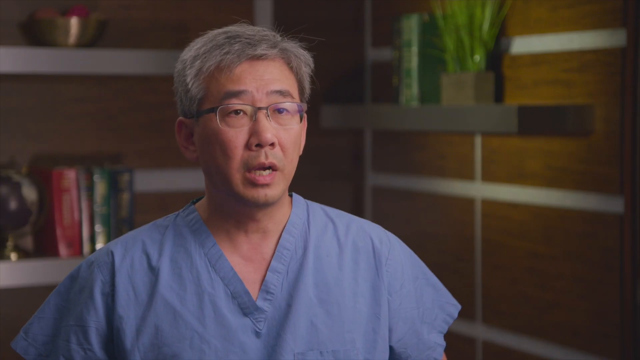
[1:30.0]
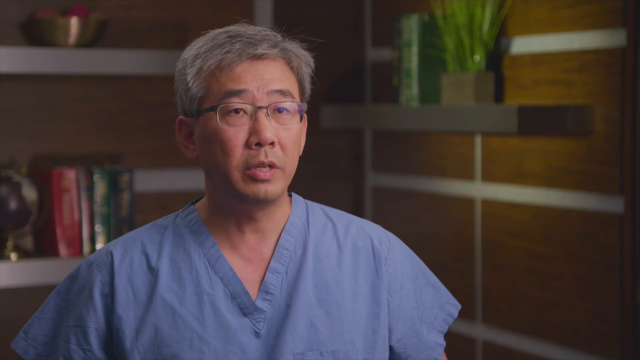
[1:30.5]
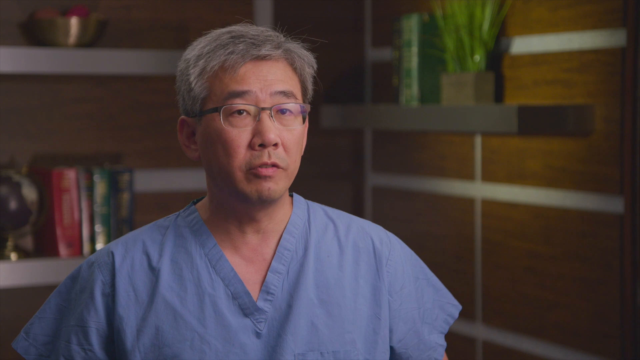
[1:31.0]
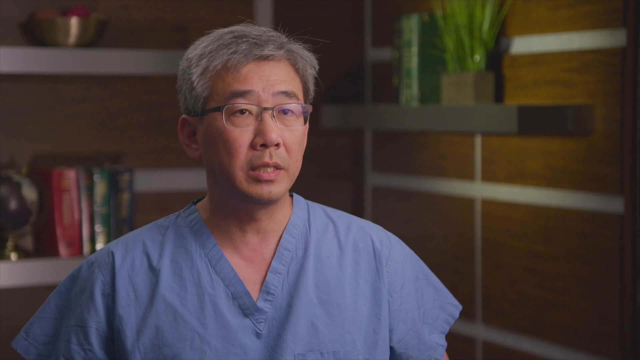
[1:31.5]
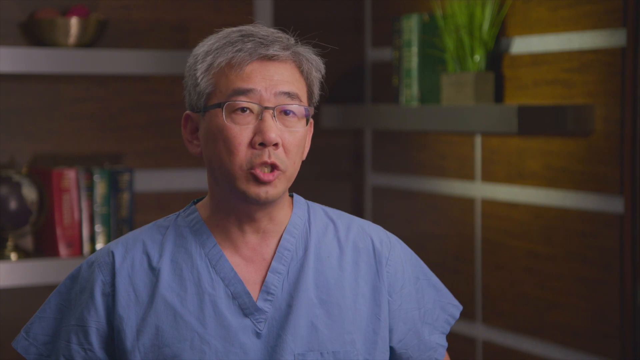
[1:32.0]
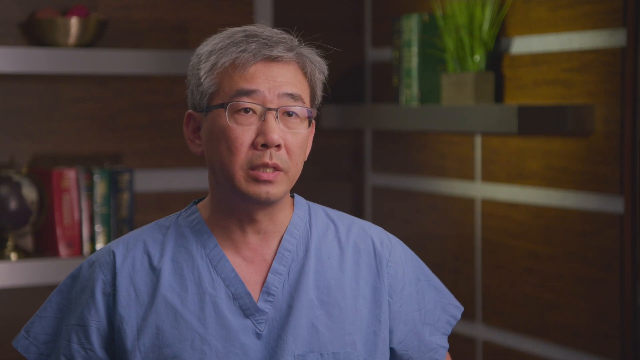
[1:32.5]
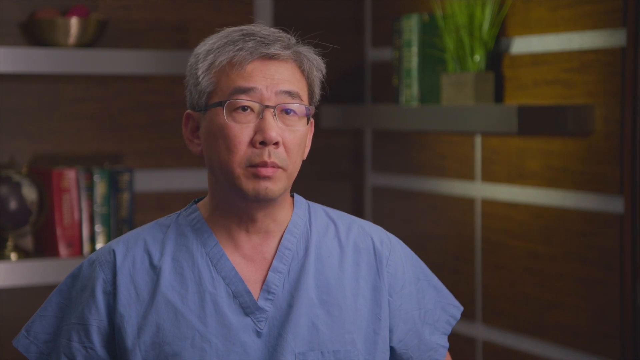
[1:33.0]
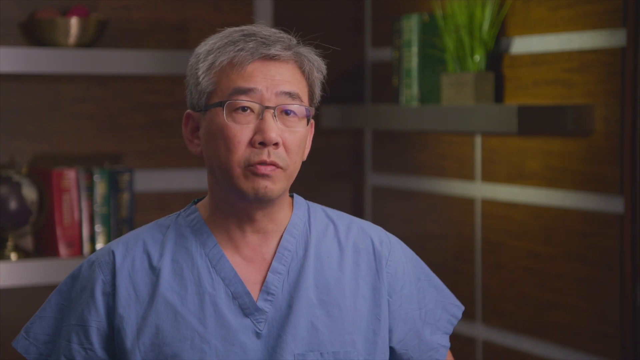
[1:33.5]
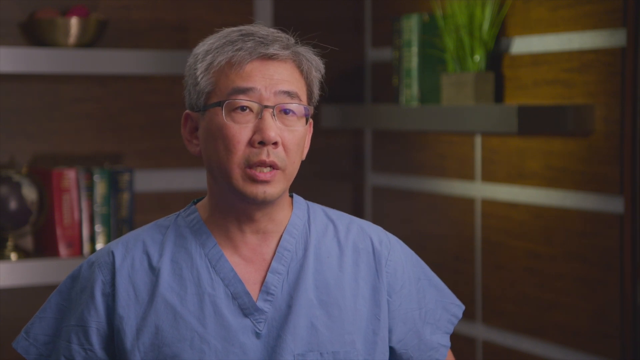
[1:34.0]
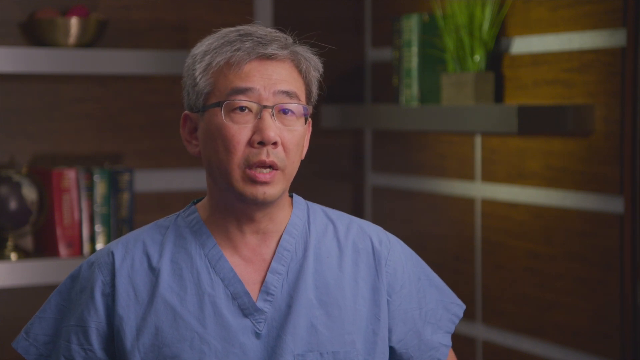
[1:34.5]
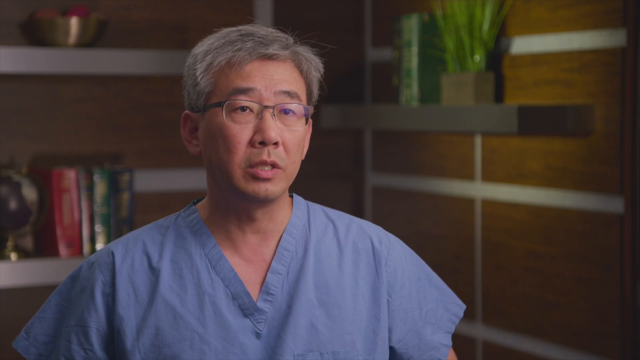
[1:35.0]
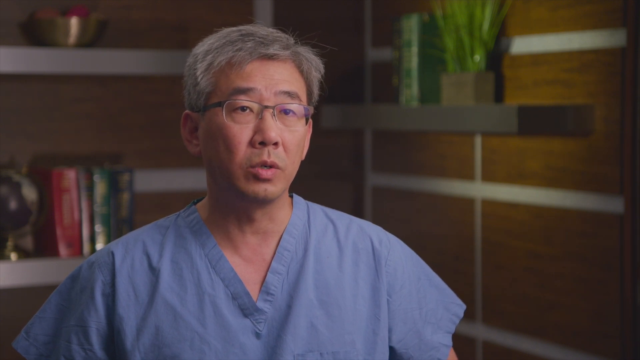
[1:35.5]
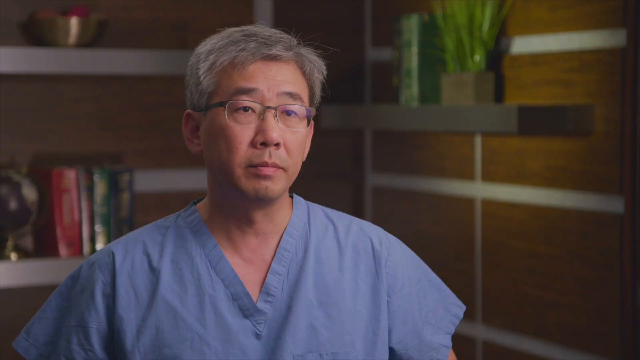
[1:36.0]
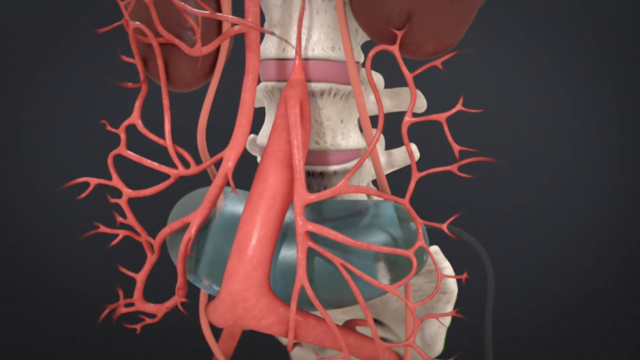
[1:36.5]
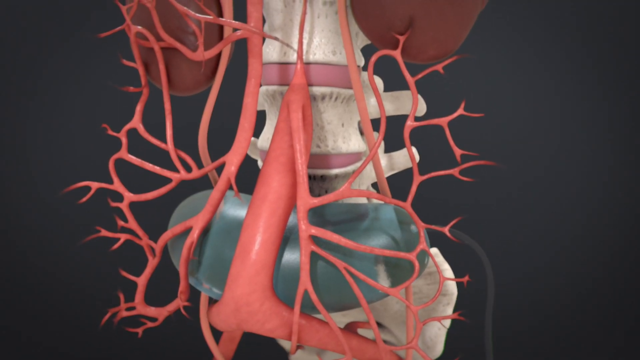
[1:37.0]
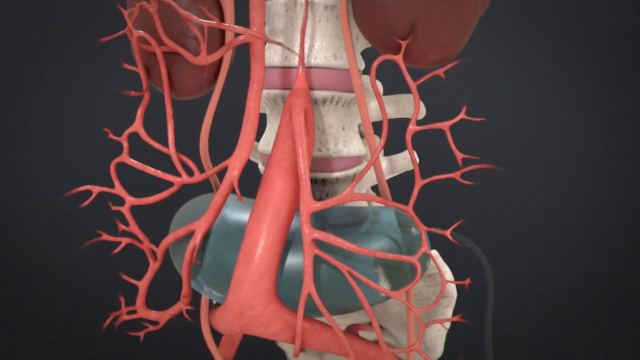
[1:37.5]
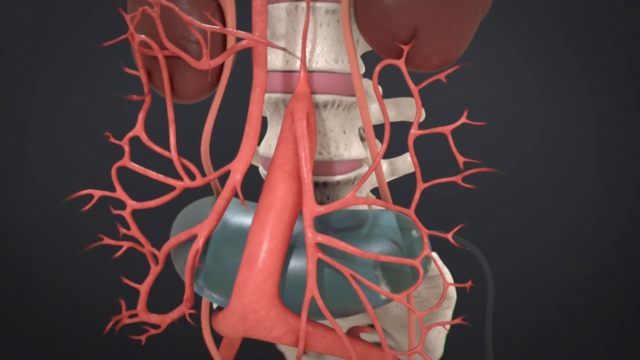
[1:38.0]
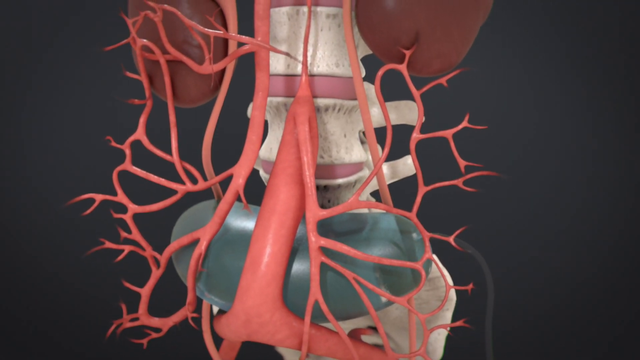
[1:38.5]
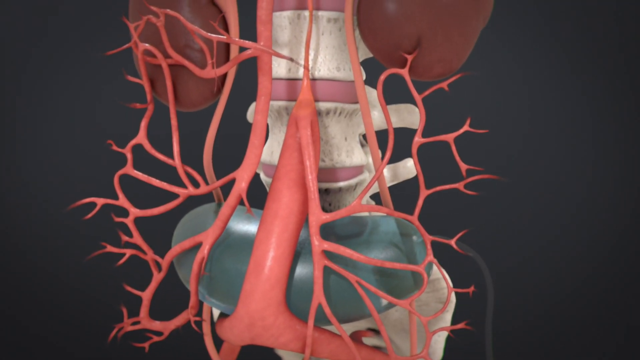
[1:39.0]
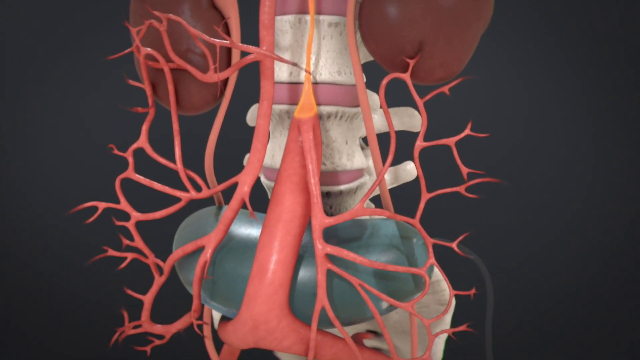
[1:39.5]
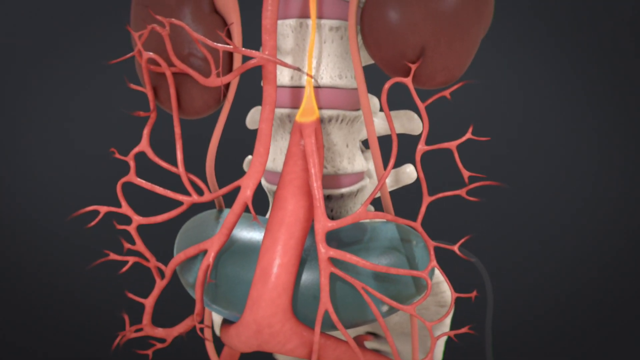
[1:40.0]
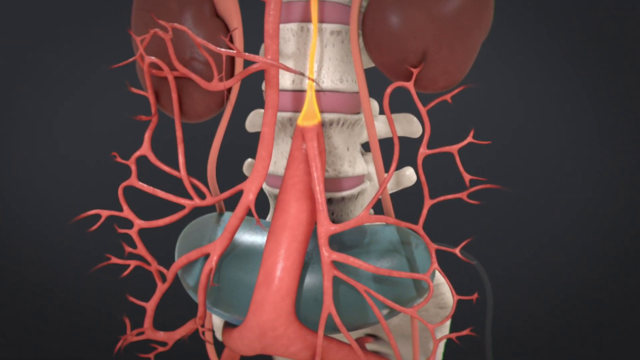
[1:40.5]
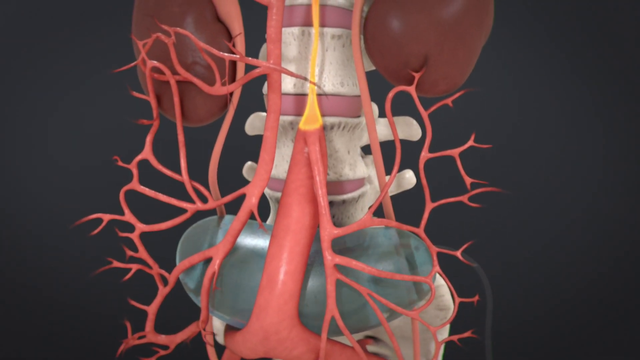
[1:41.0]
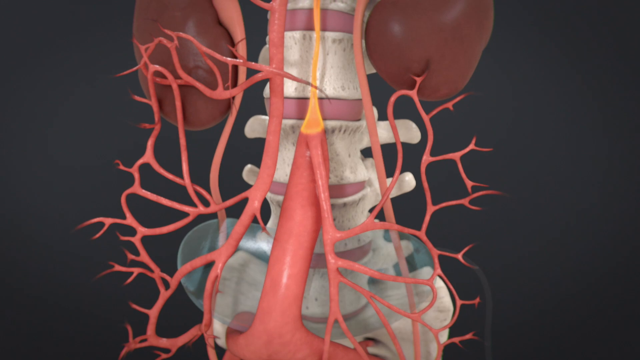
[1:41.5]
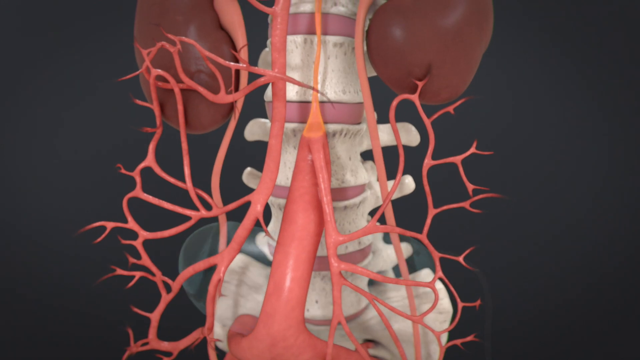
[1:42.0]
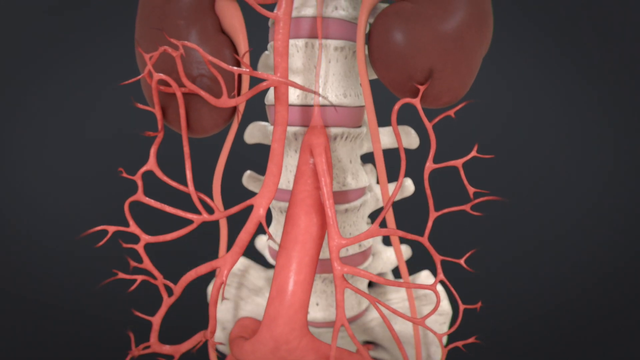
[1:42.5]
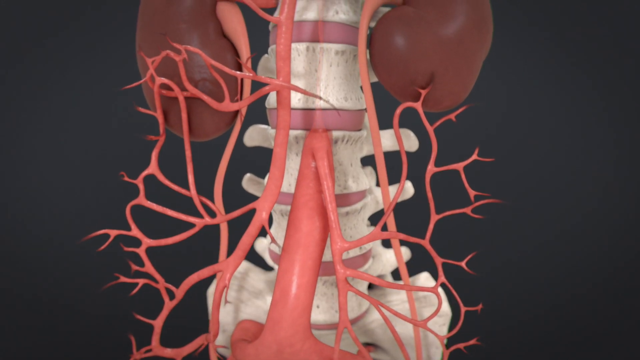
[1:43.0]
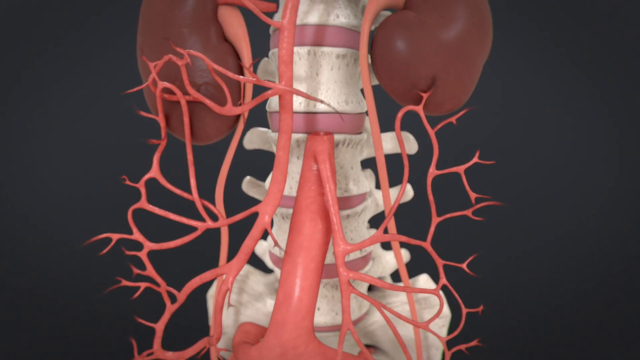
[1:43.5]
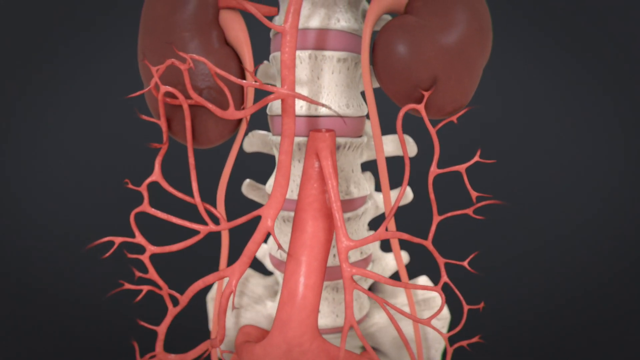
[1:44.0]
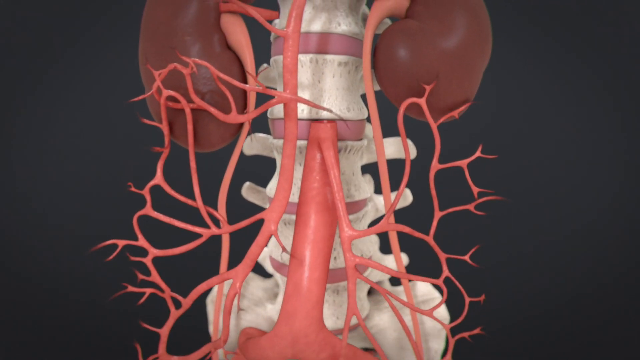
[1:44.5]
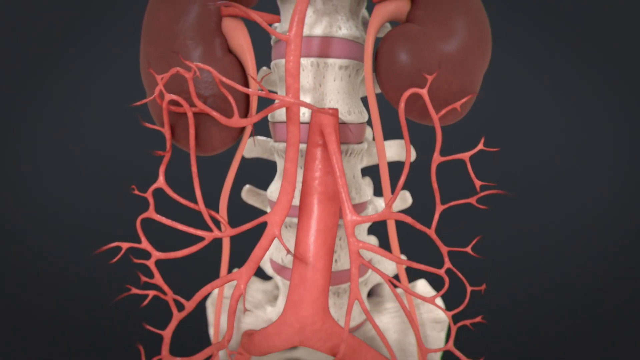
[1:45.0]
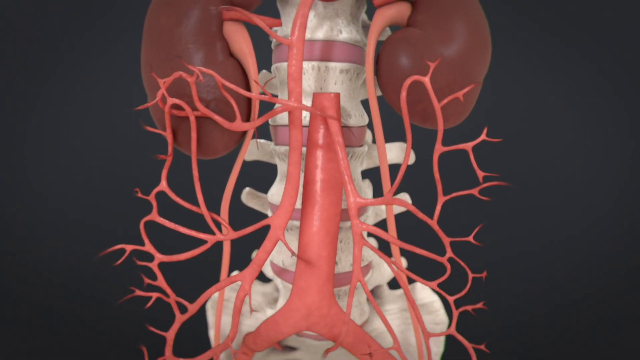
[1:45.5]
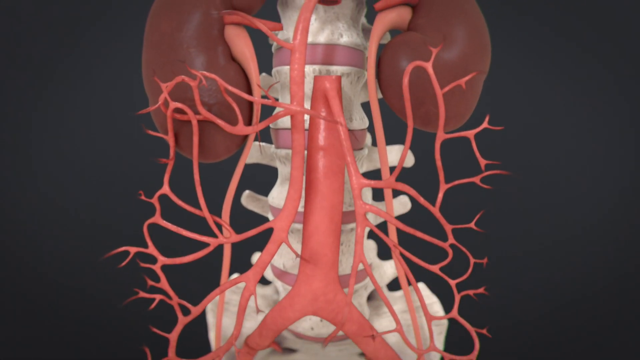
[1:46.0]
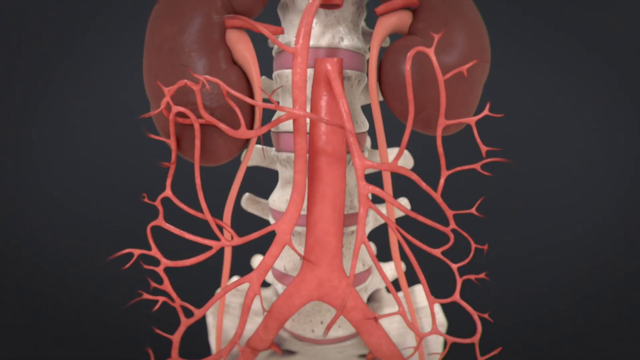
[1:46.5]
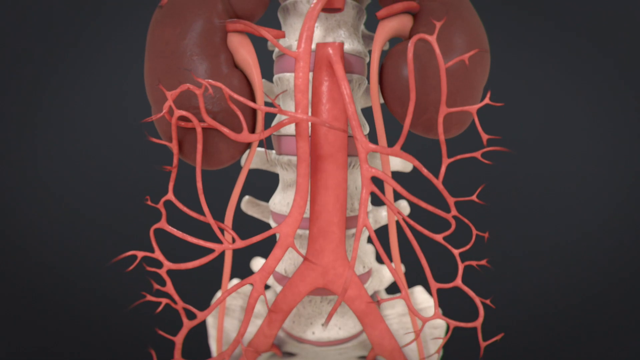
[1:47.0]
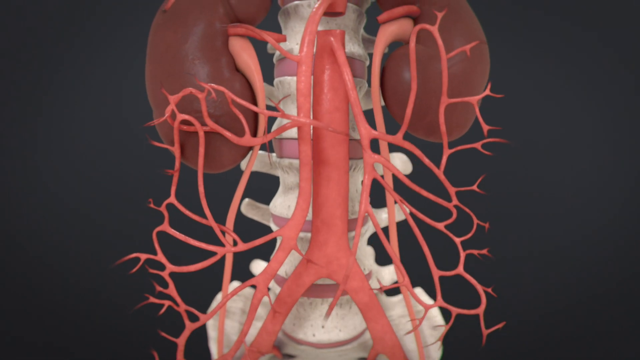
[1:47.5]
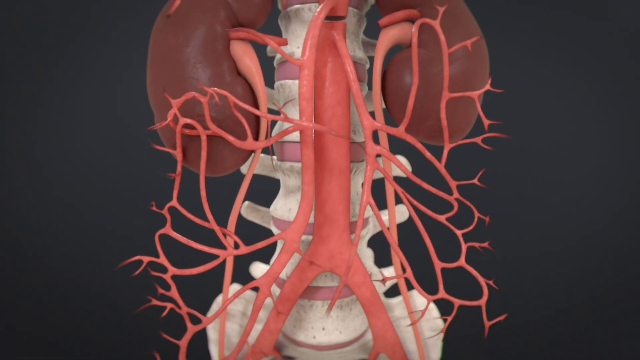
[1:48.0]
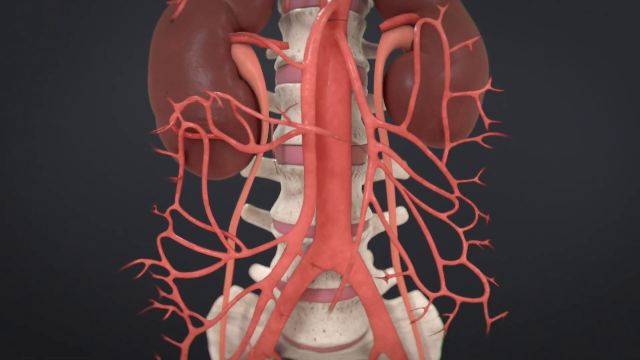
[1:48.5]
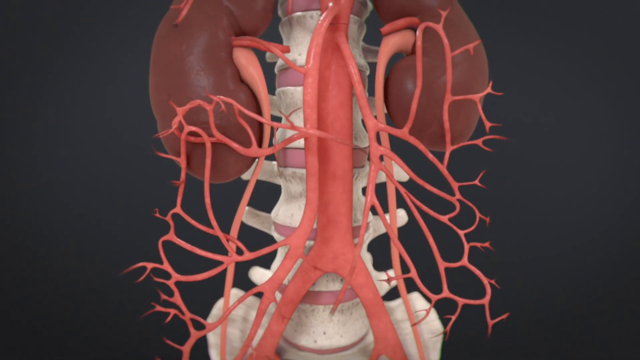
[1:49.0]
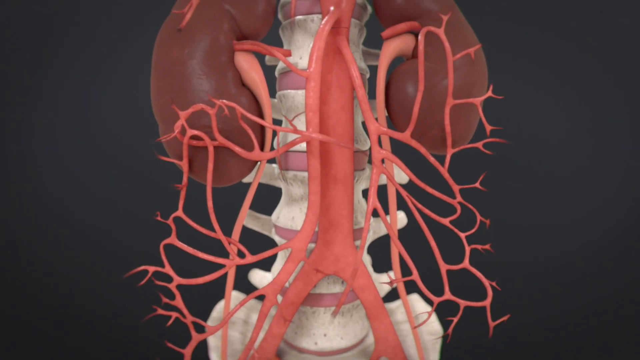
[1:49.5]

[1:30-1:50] The doctor appears in a slightly angled view from the left, talking to a person to the right of the camera. The scene changes to a close-up of the nerve system and the spine, with the device placed horizontally between them. The diagram is still spinning, now slowly counter-clockwise, and more nerve systems appear attached to what looks like lungs. The scene returns to the doctor sitting in the wood-paneled office, talking to the interviewer. He is seen from the chest up, his blue scrubs kind of wrinkled, and his head angles slightly to the right as he talks. The diagram returns with the device taken out of the back of the spine, and a more complex nerve system has grown over the spine.